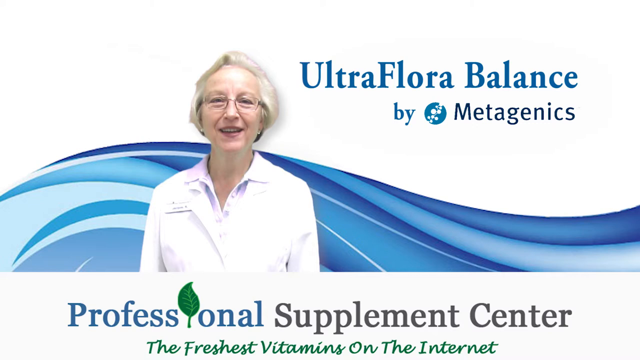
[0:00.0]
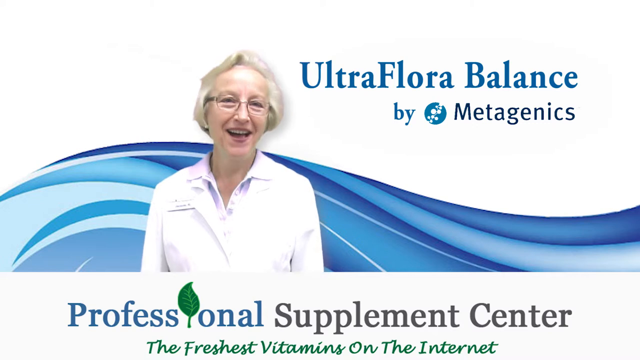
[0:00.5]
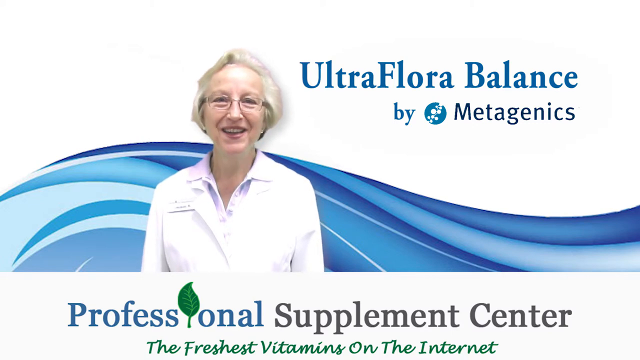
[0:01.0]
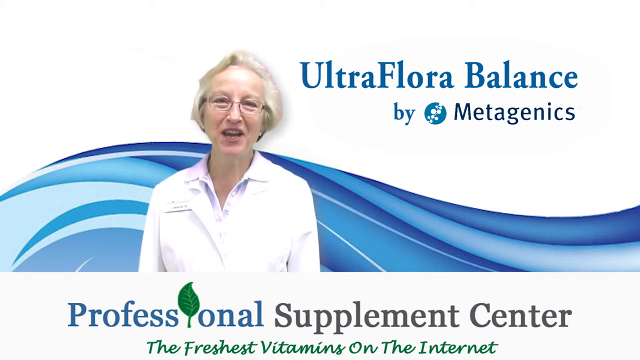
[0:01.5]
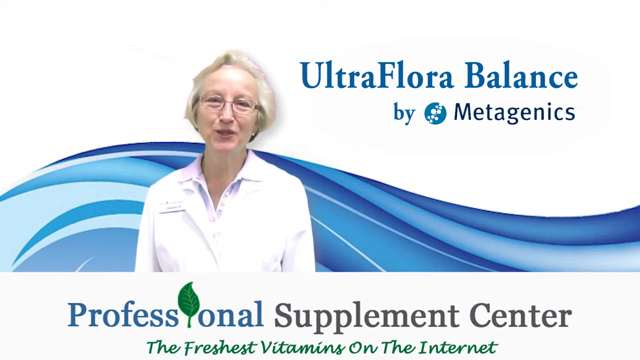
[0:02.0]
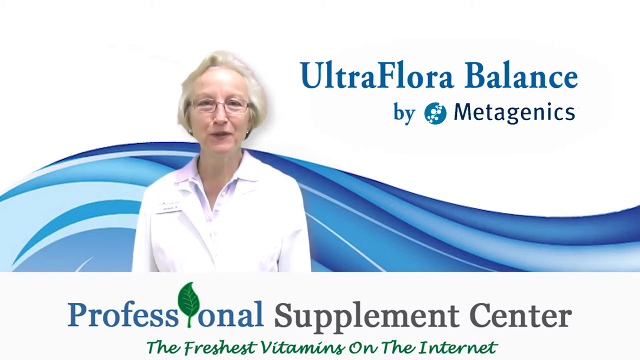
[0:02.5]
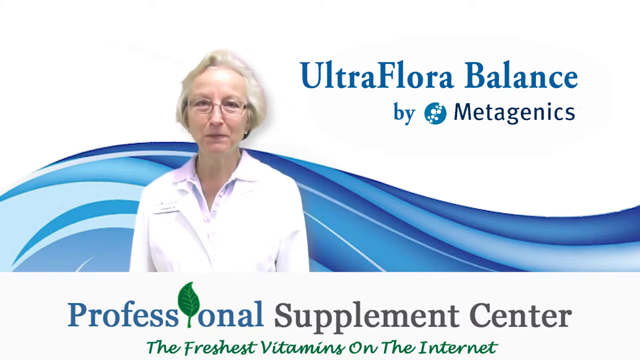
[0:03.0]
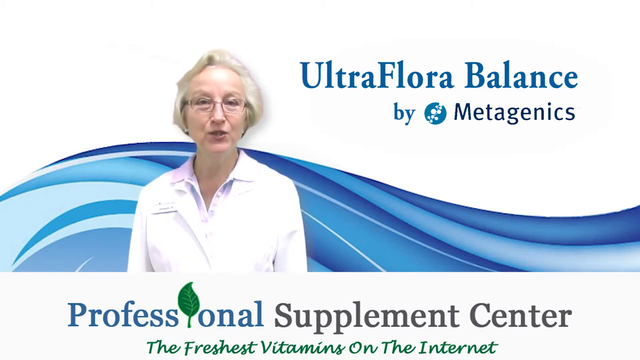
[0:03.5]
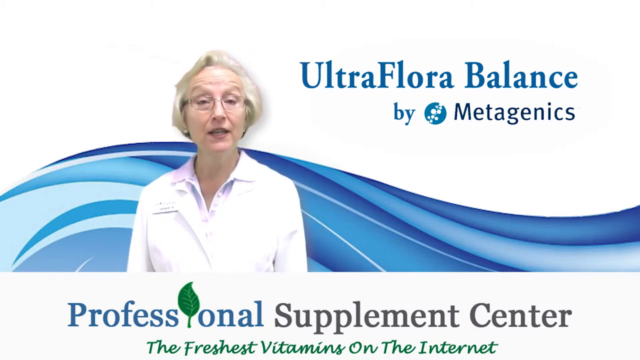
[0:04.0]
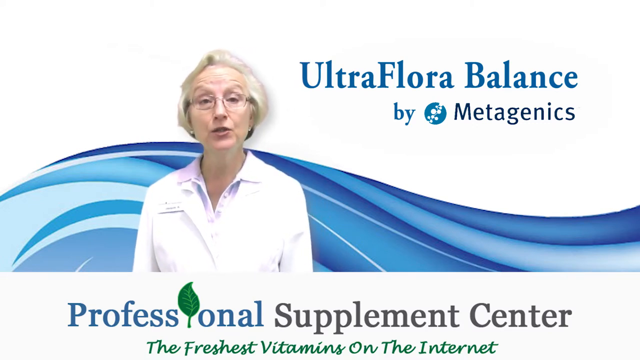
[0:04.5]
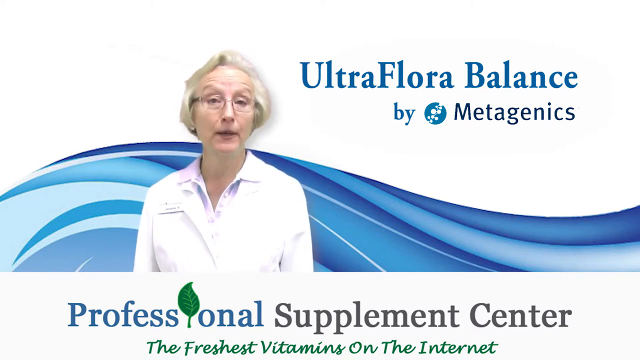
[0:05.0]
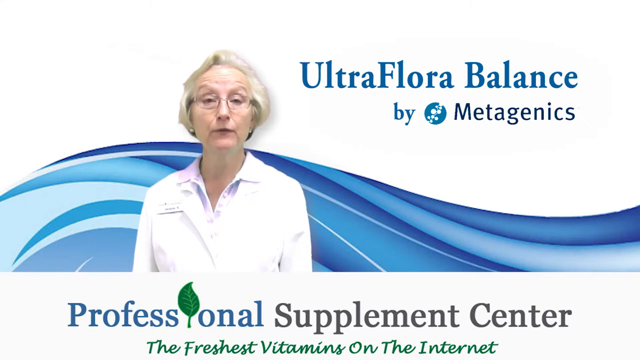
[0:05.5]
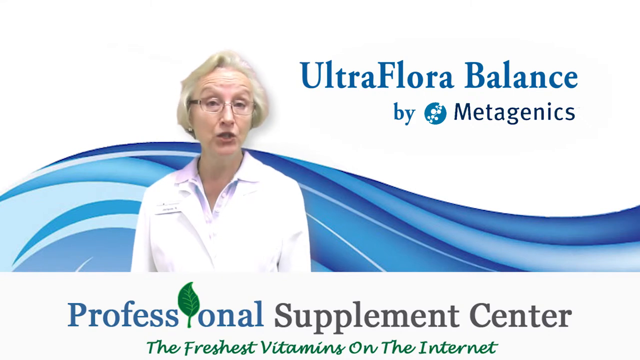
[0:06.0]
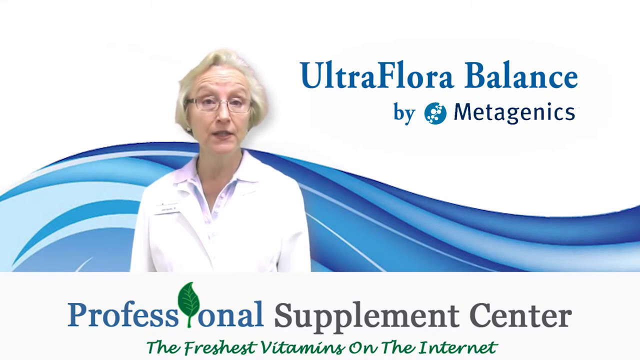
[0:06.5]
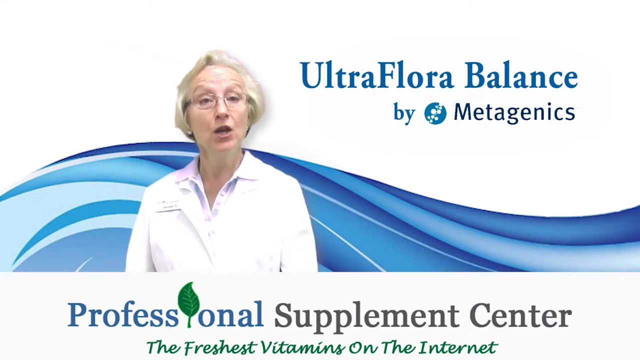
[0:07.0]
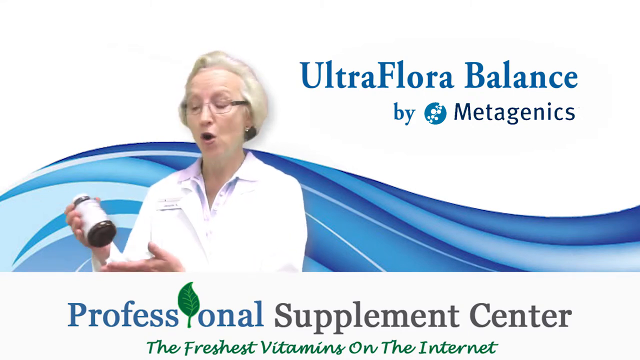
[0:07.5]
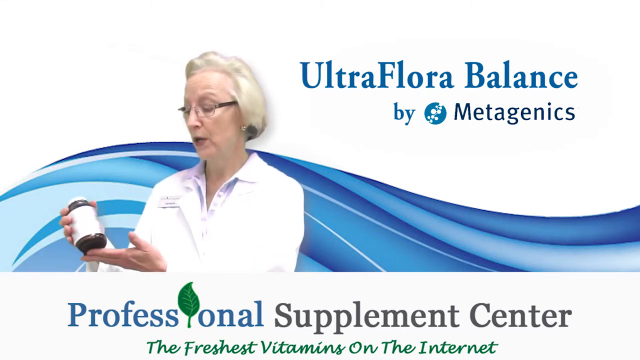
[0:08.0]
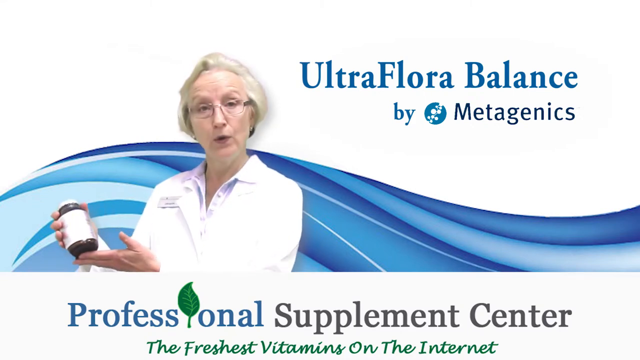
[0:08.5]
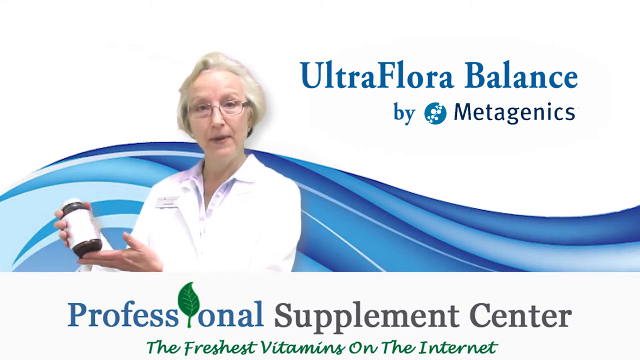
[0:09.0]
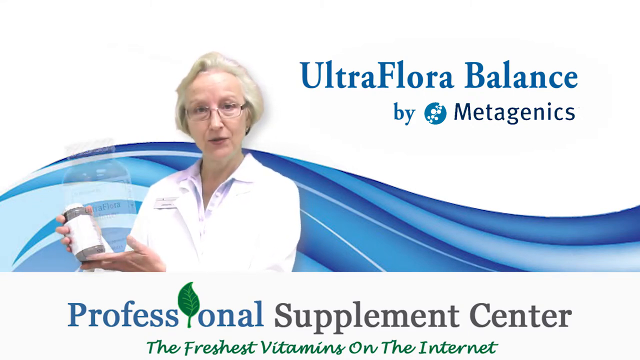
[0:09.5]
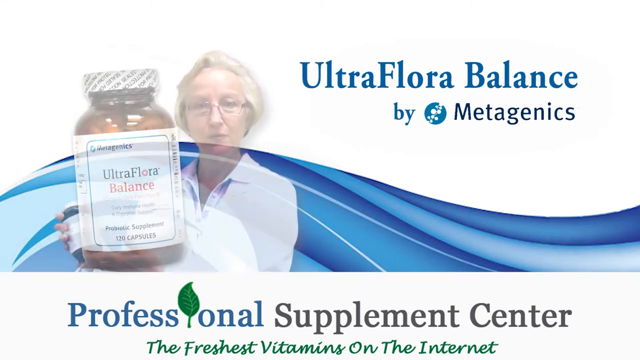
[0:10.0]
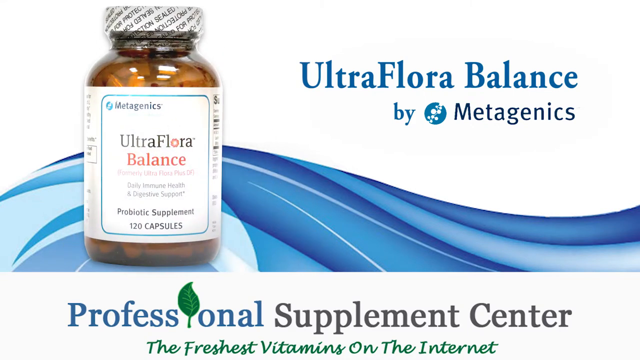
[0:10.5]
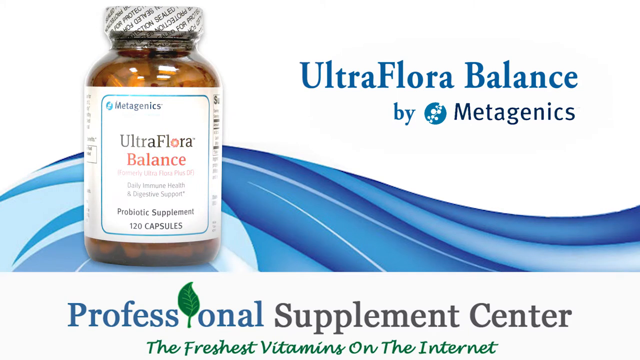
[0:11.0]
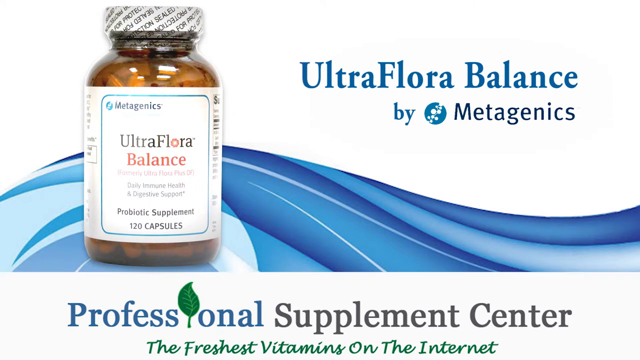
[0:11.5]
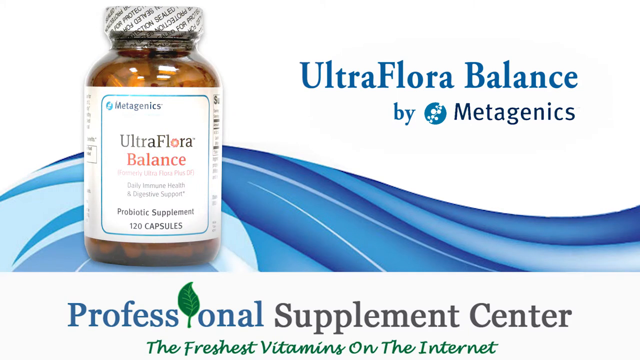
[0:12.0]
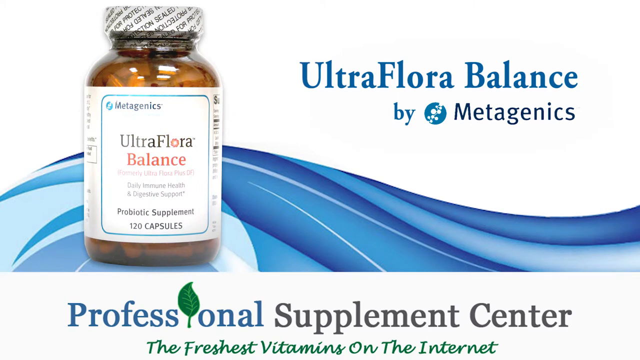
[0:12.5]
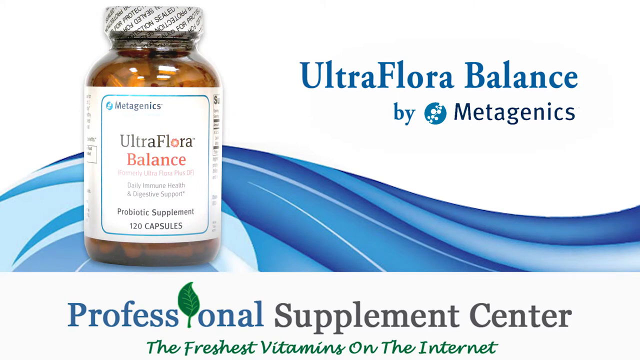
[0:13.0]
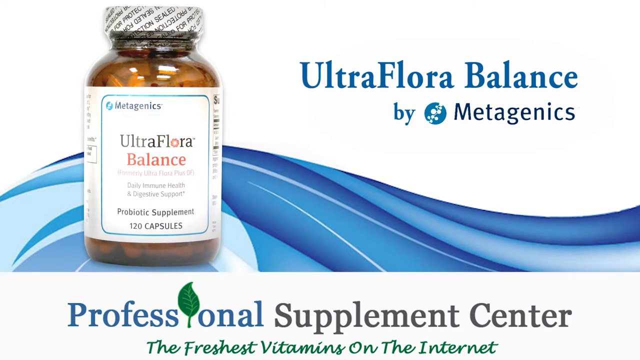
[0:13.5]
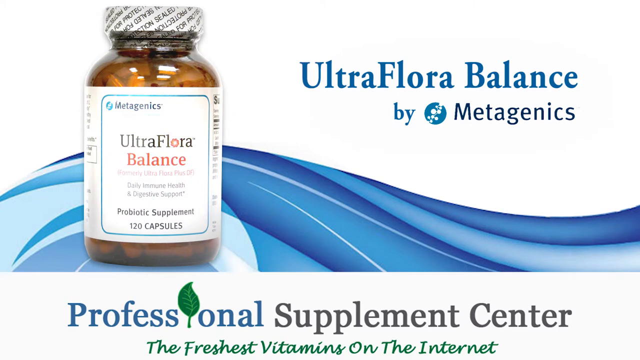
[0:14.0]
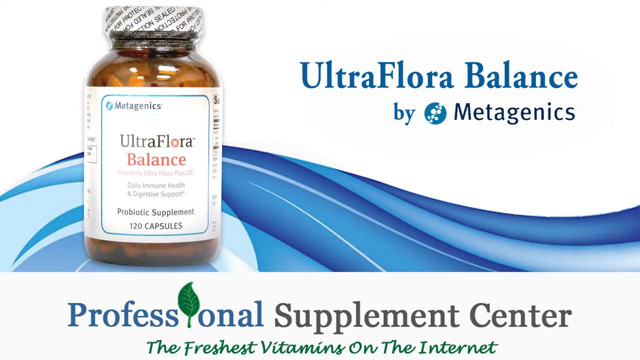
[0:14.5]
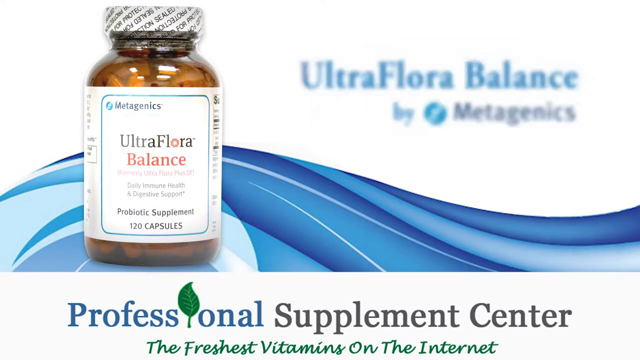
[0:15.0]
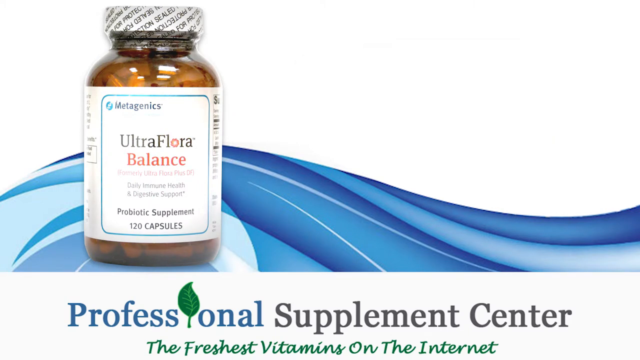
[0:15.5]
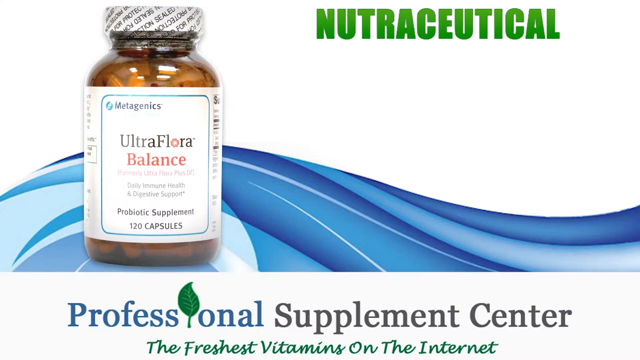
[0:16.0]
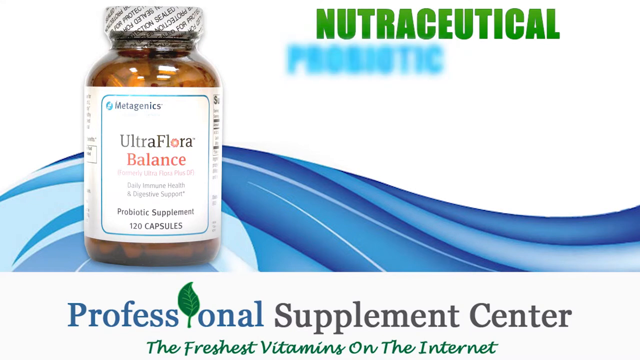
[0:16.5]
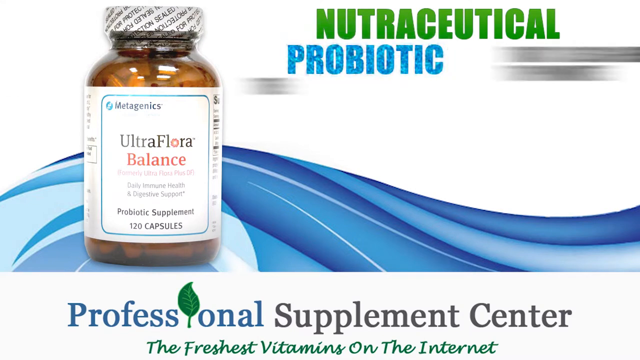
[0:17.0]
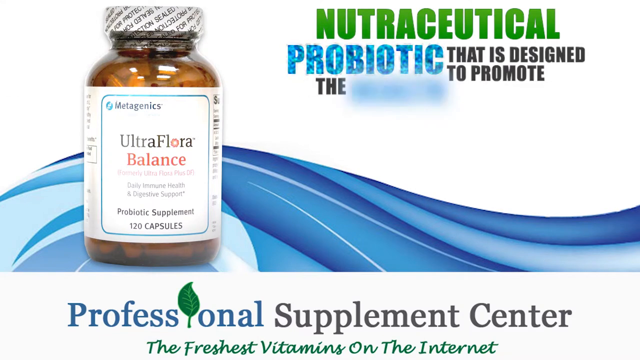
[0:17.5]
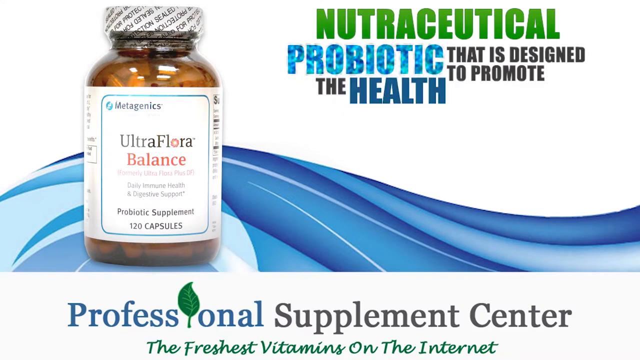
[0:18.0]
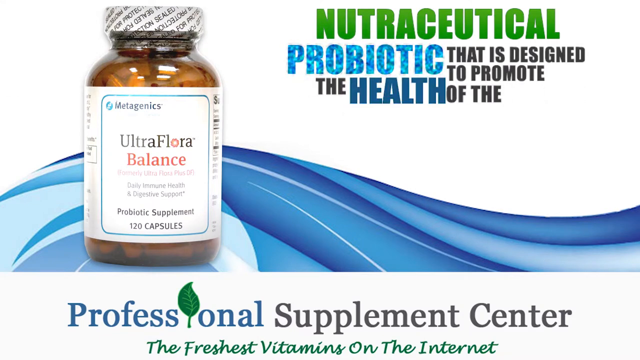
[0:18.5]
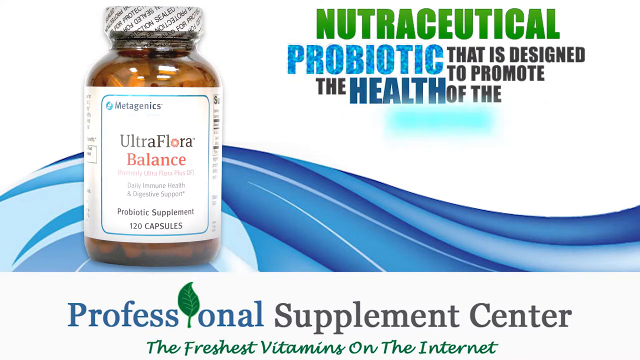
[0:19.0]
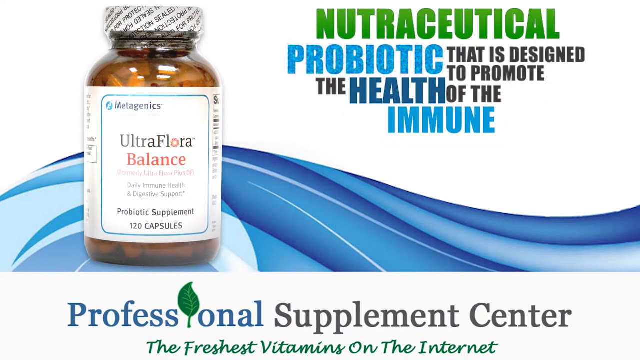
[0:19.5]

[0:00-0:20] A woman with greyish hair, wearing spectacles, holds a product package in her hands and presents it. The package reads "Ultra Floral Balance Probiotic Supplements, 120 capsules Daily Immune Health and Digestive Support"; the product is Ultra Floral Balance by Metagenics, and a professional supplement center, "the freshest vitamins on the internet", is also shown. The product appears to be a supplement, a nutraceutical probiotic designed to promote the health of the immune system. The design is blue. The woman is probably in her 60s.